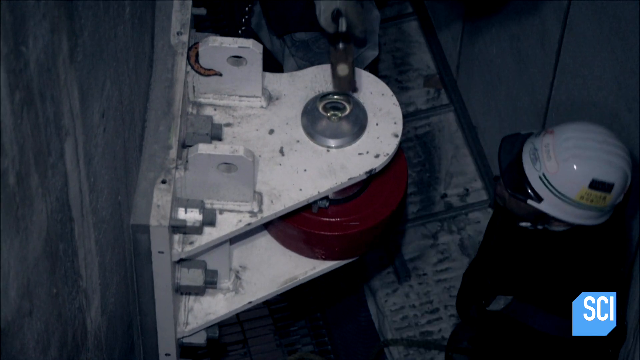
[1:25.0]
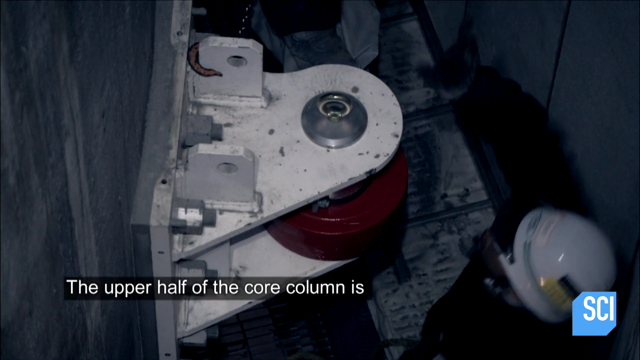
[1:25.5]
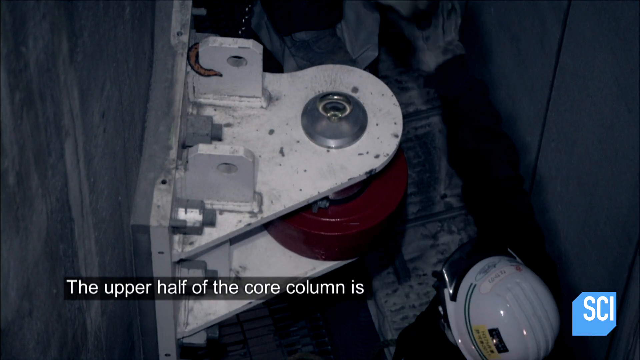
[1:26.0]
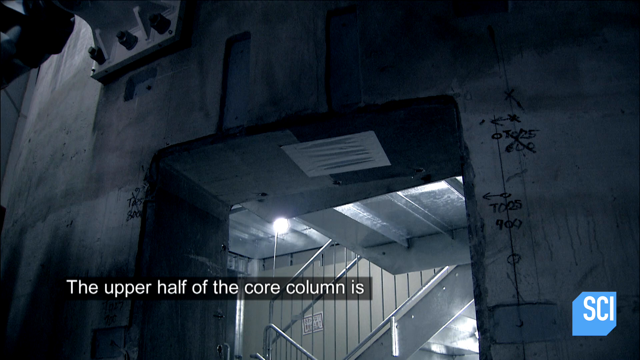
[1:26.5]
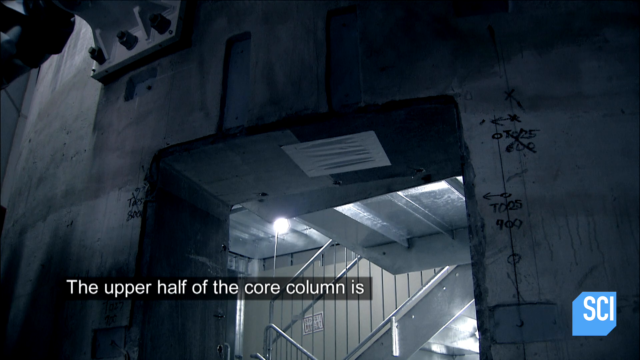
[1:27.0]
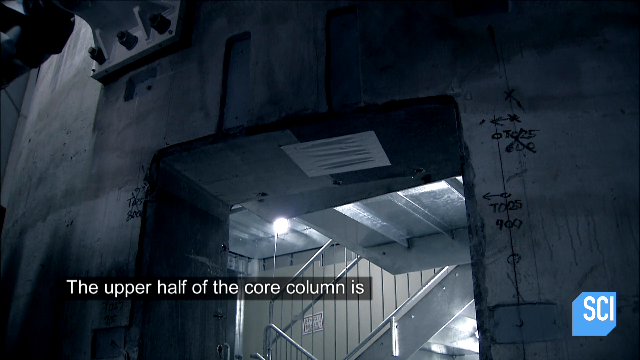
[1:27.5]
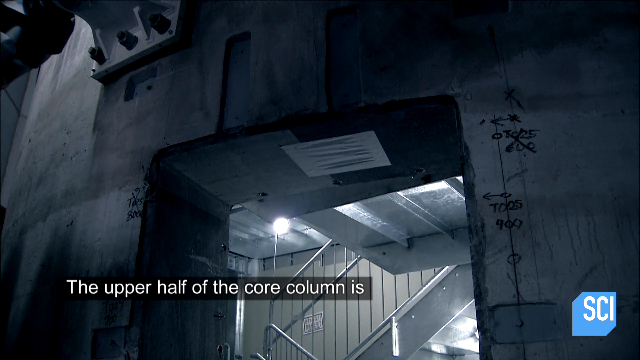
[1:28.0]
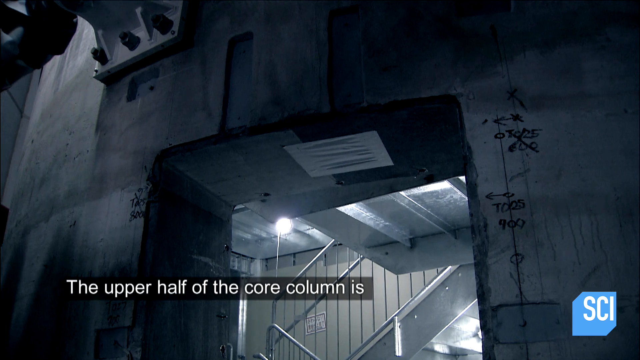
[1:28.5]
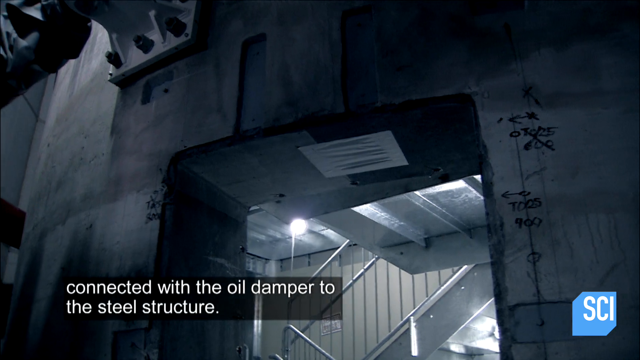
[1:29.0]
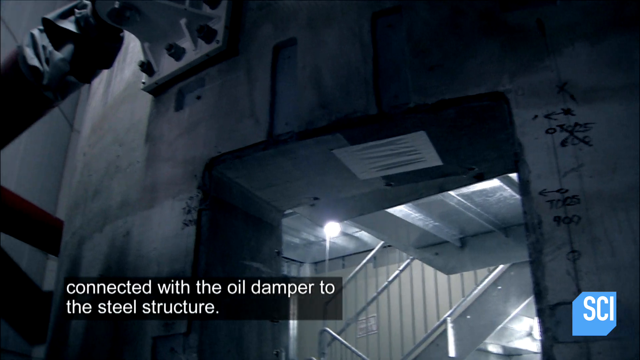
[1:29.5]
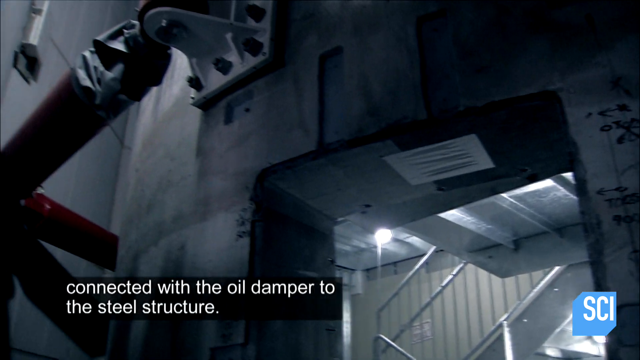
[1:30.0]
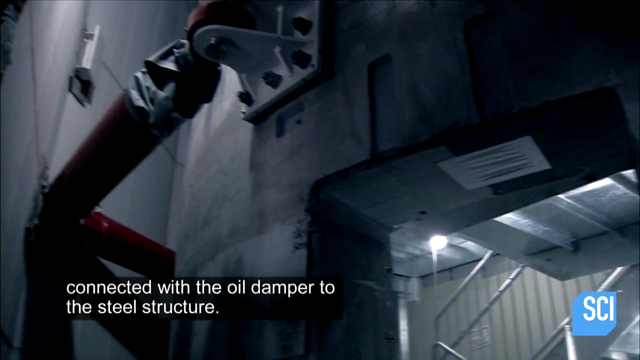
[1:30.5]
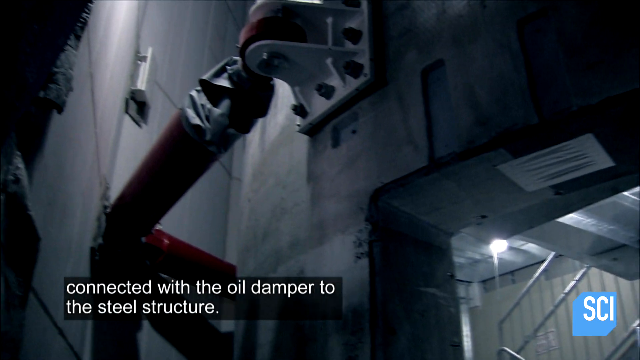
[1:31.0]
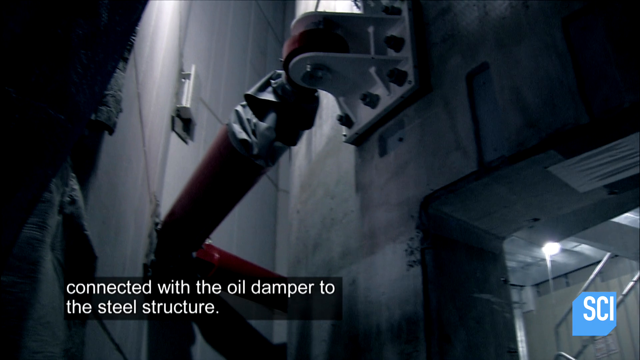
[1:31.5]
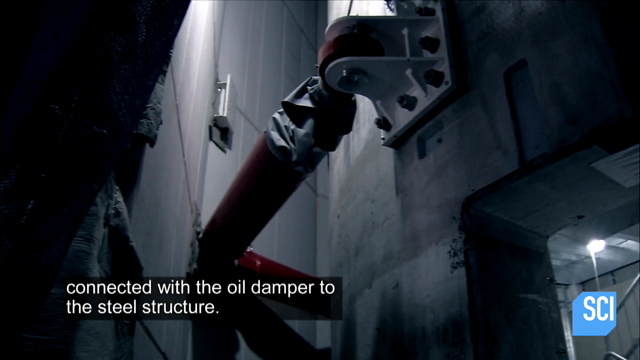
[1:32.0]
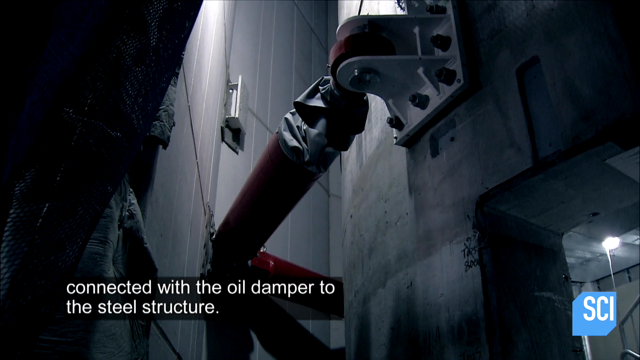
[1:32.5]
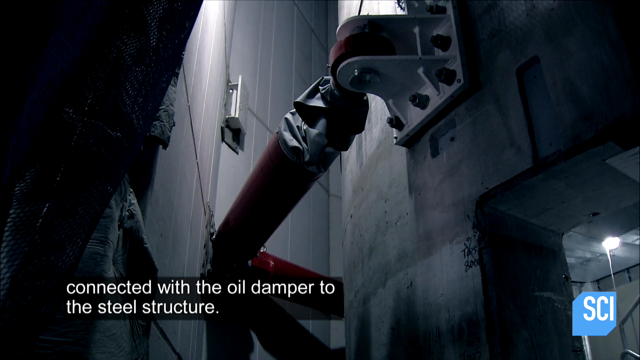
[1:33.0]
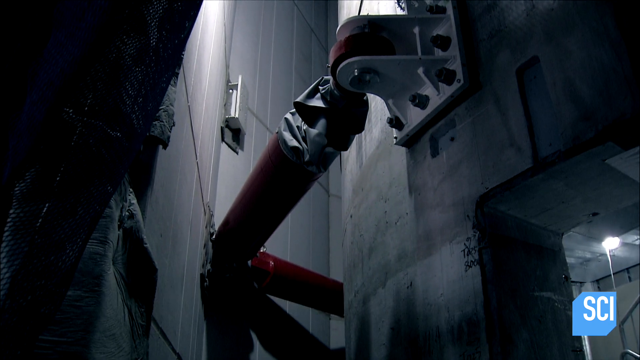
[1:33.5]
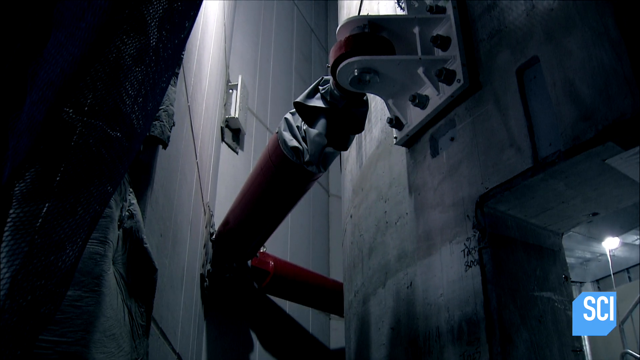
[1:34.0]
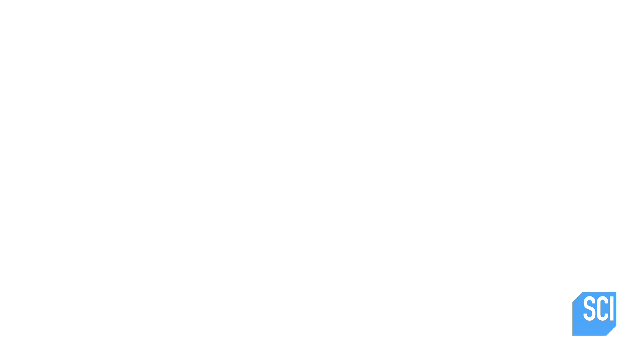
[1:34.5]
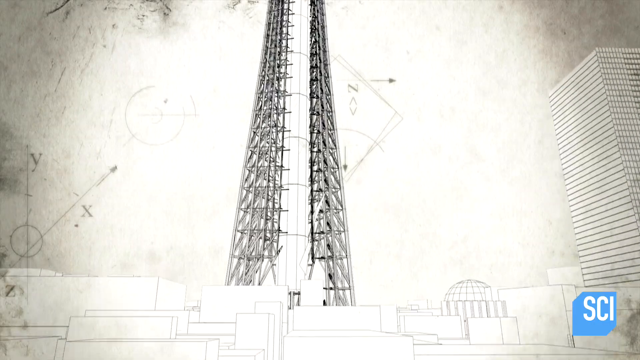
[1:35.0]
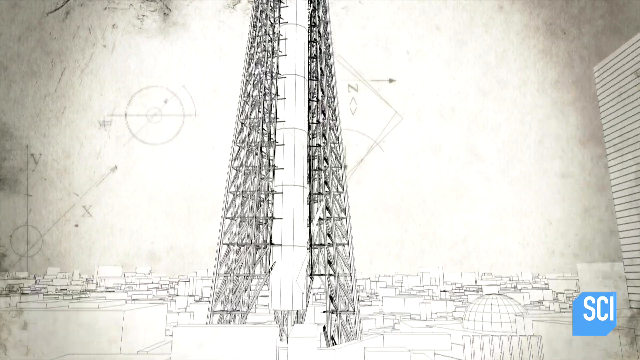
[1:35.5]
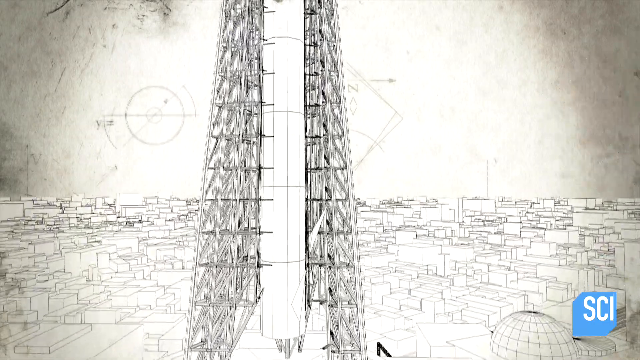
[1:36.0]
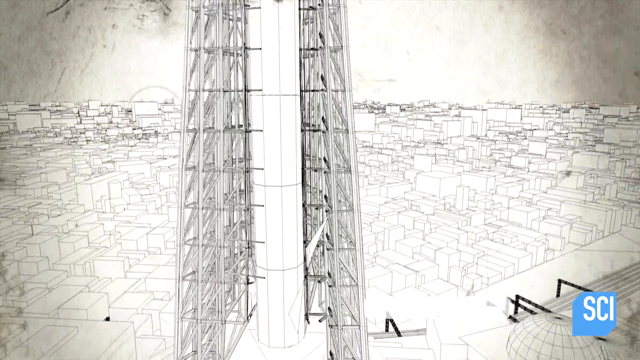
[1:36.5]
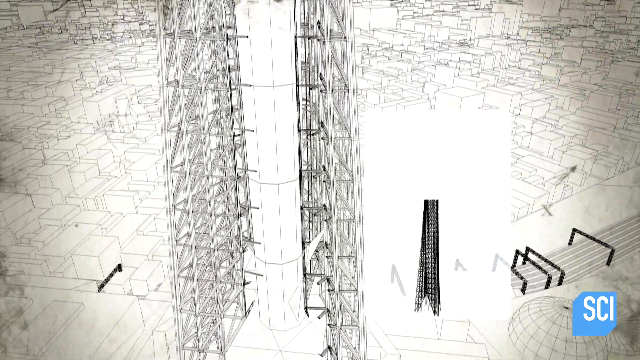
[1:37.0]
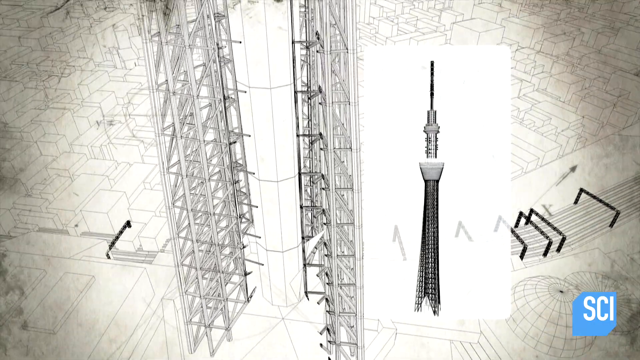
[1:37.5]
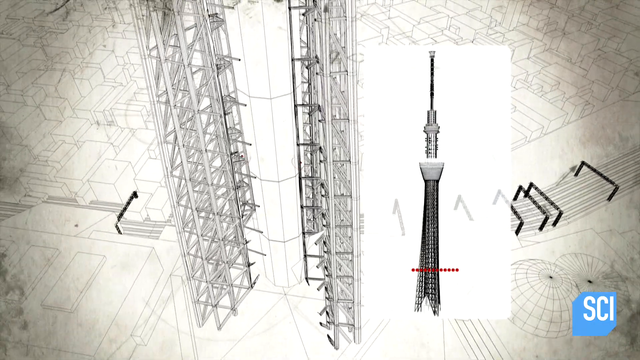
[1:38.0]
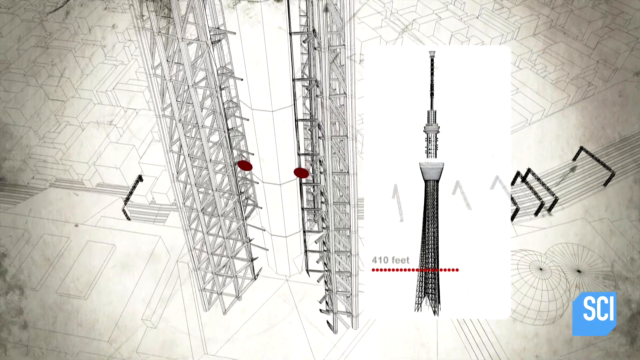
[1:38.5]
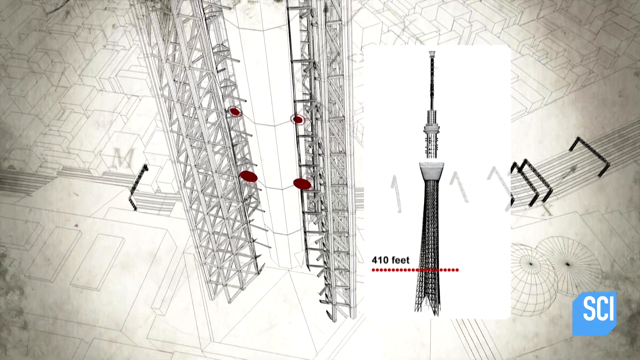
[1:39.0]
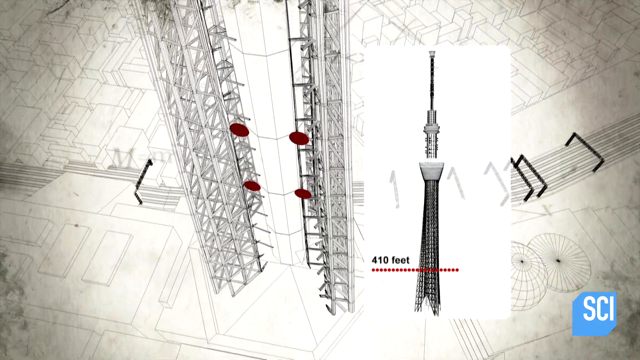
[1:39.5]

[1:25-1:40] An inside view is followed by blueprints showing the size of the building. The blueprint shows the inside of the building, with a smaller view of the whole building on the side. Toward the bottom, it indicates that the level where they are working is at 410 feet, still low compared to the very top of the building. The blueprint also shows the other buildings in the city along with the giant column being built.